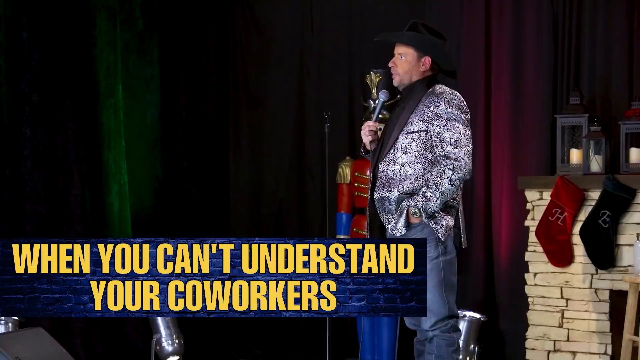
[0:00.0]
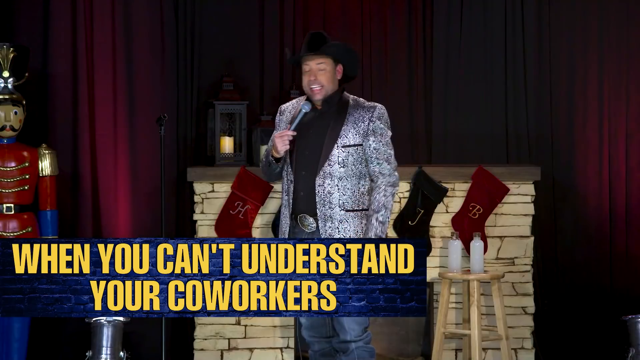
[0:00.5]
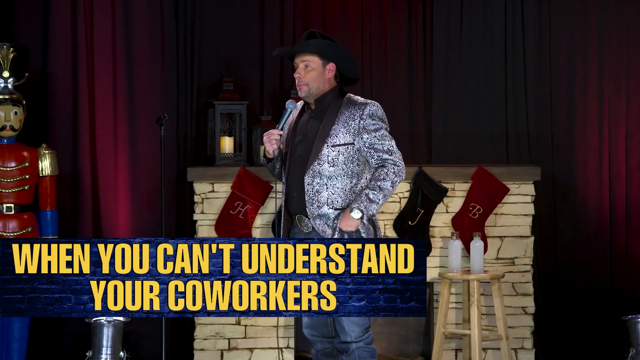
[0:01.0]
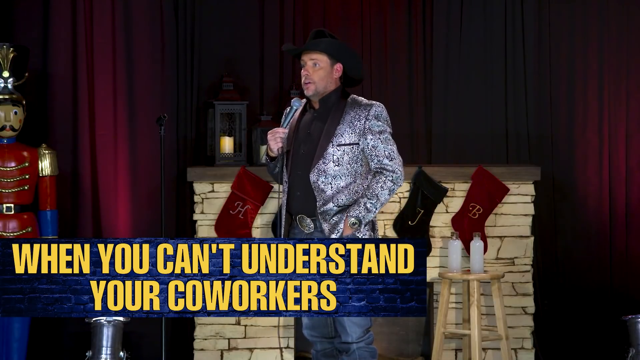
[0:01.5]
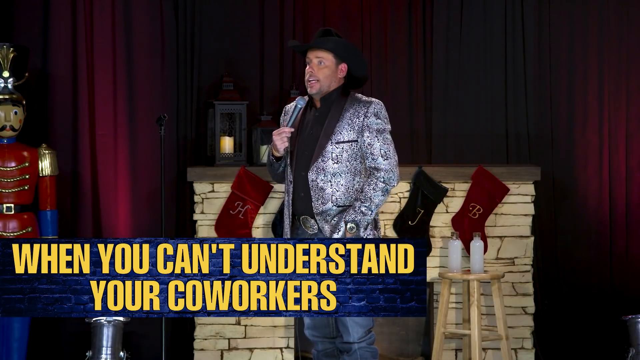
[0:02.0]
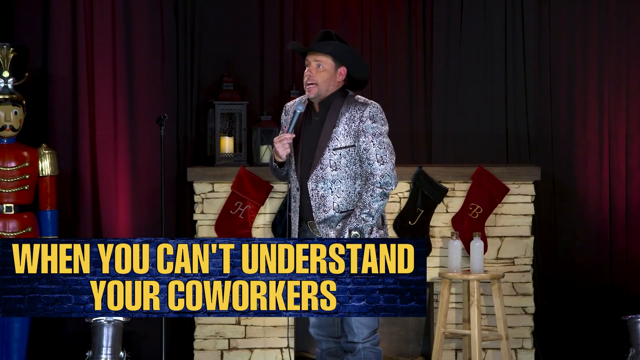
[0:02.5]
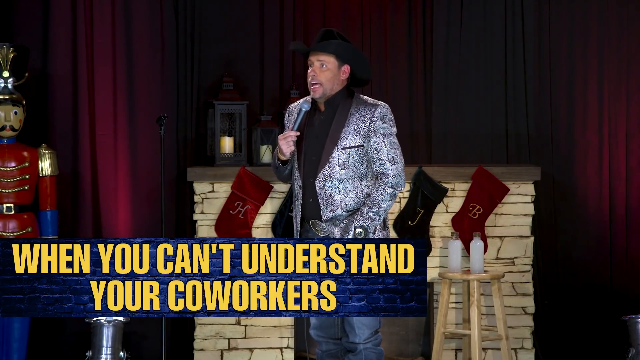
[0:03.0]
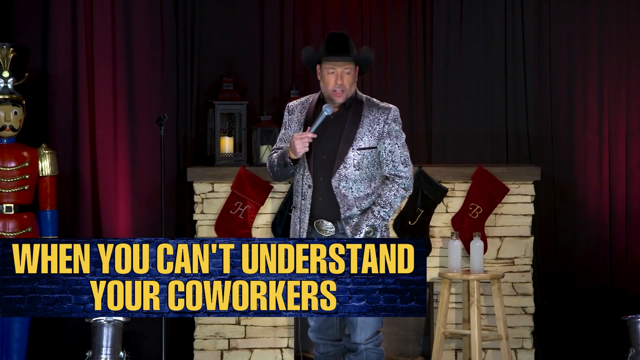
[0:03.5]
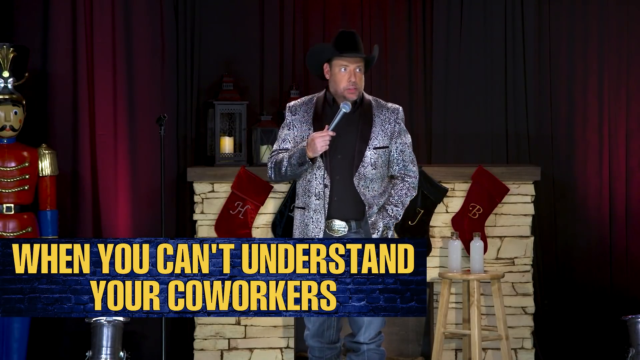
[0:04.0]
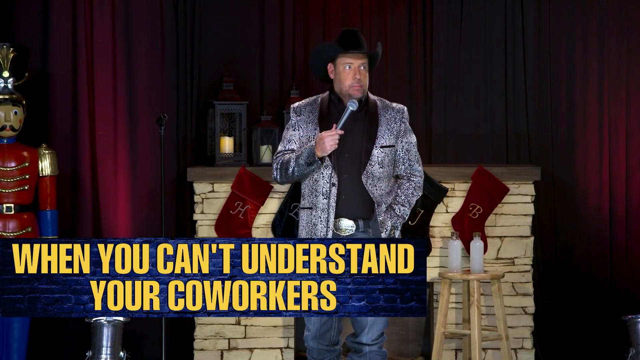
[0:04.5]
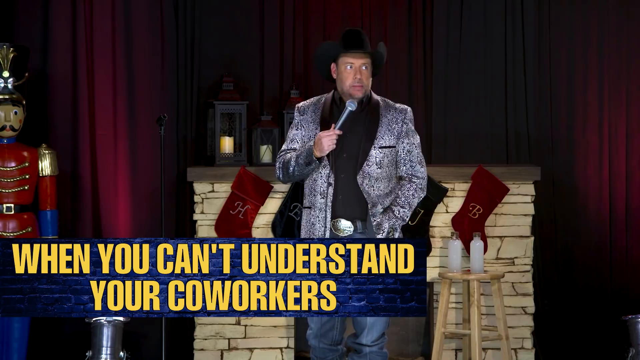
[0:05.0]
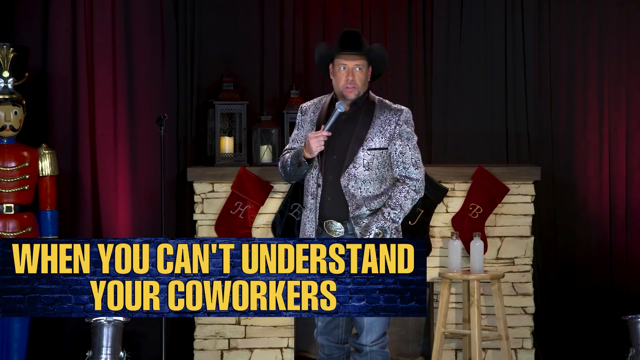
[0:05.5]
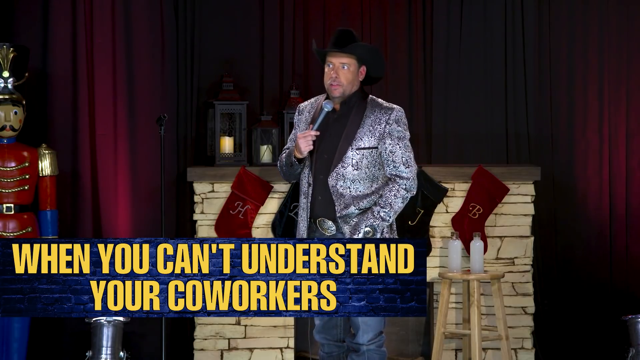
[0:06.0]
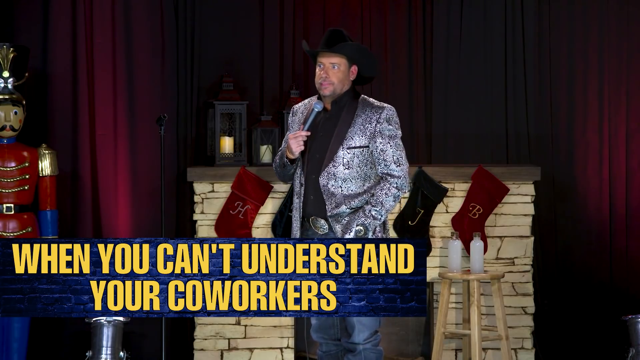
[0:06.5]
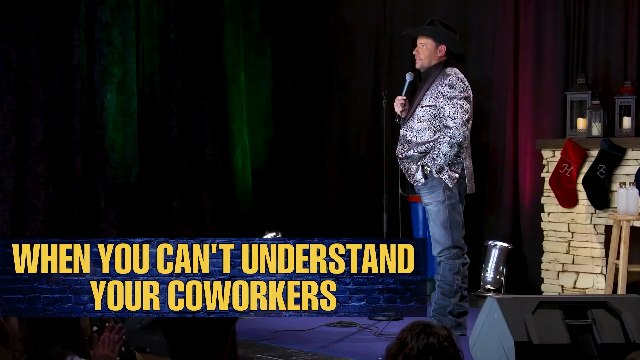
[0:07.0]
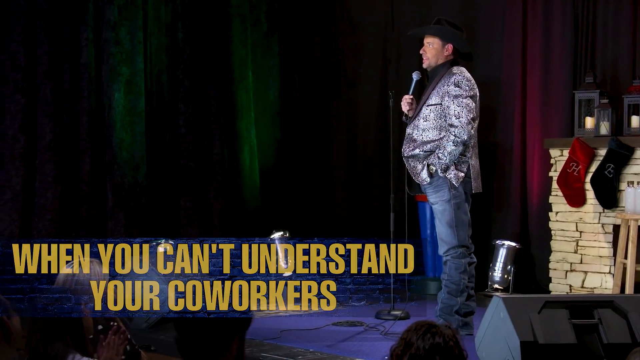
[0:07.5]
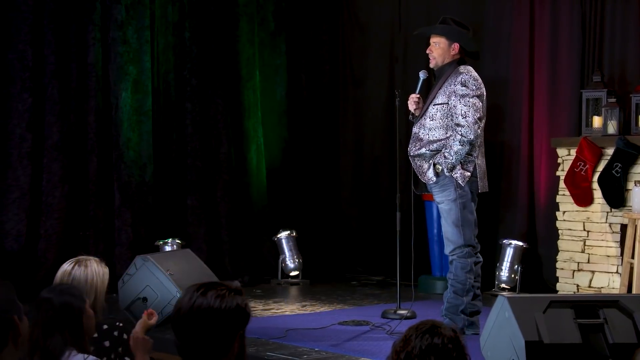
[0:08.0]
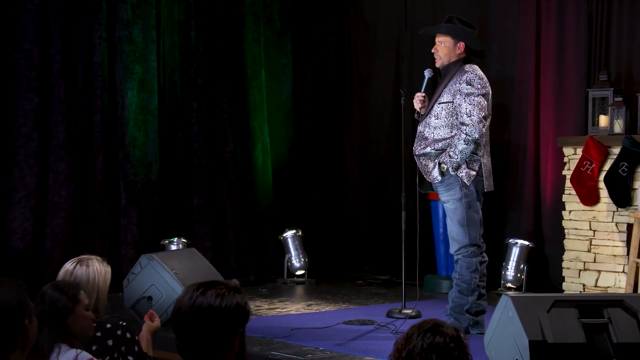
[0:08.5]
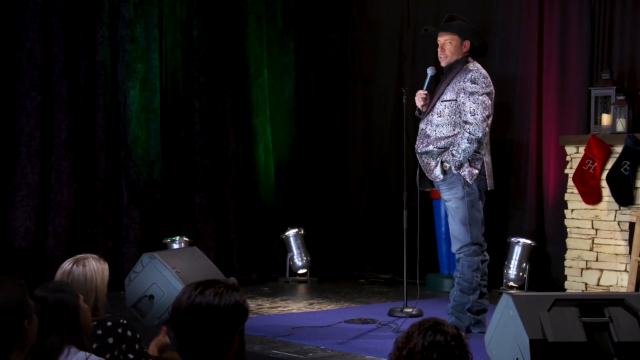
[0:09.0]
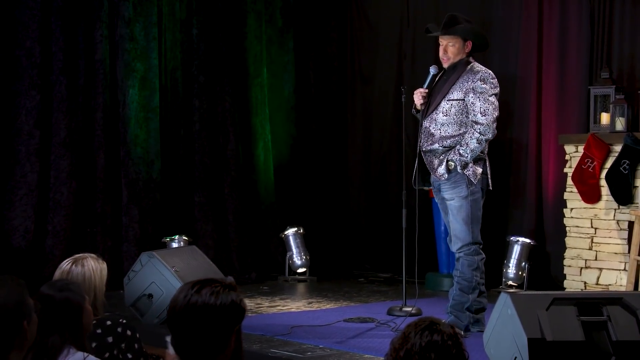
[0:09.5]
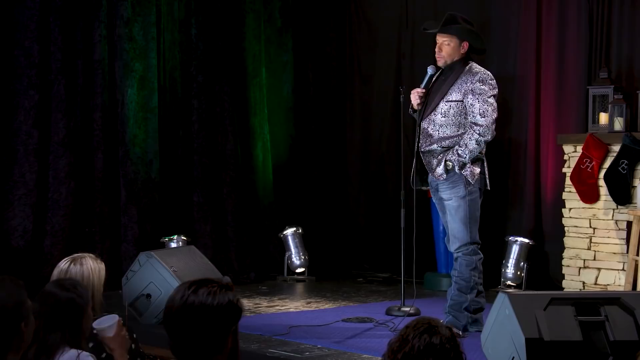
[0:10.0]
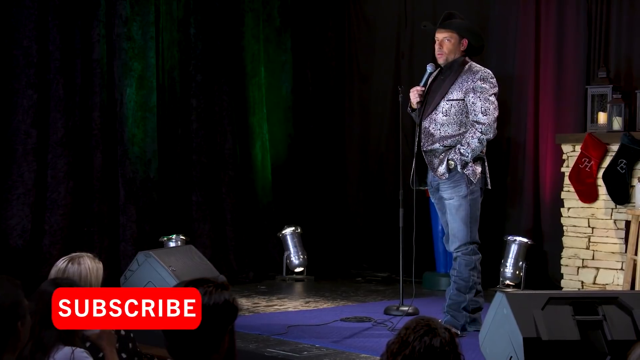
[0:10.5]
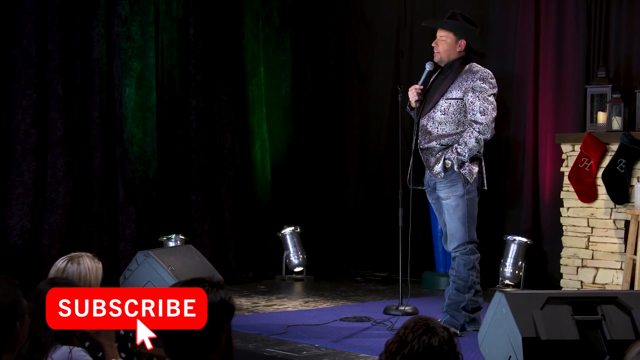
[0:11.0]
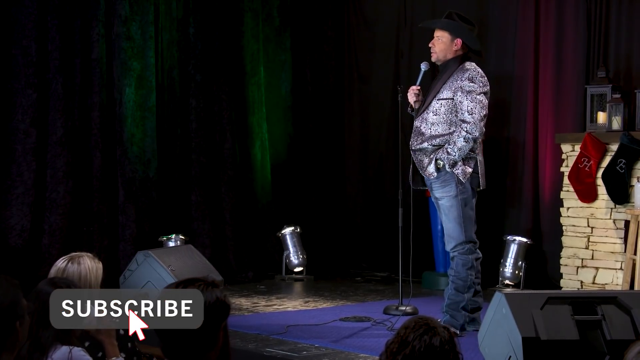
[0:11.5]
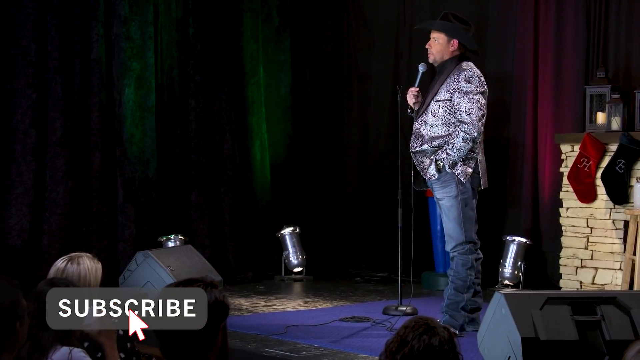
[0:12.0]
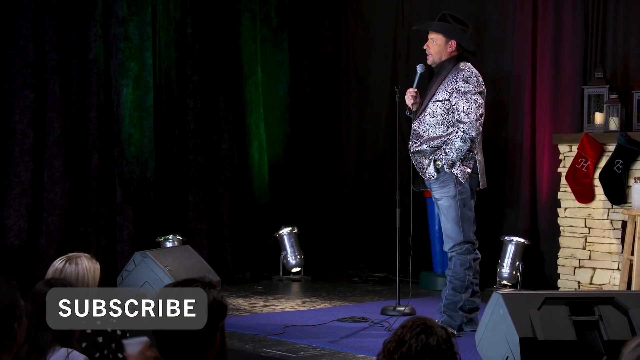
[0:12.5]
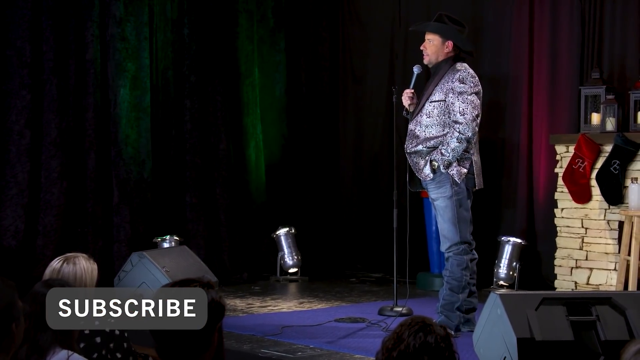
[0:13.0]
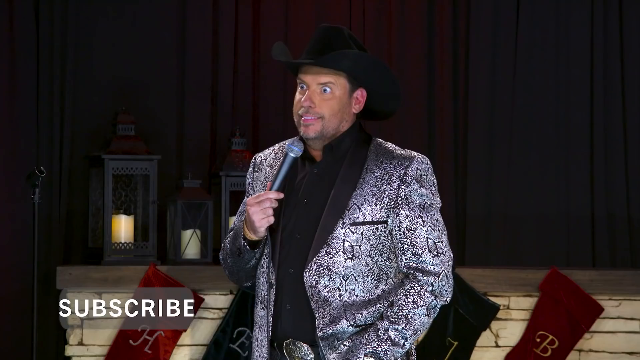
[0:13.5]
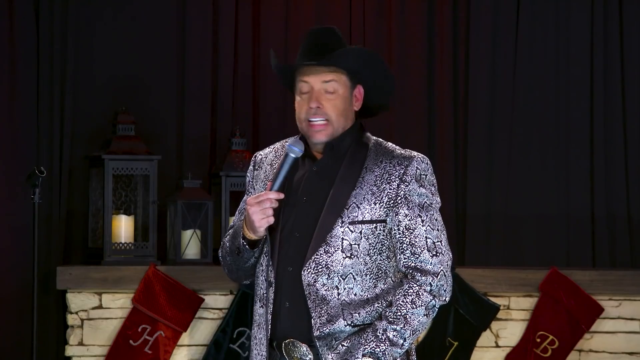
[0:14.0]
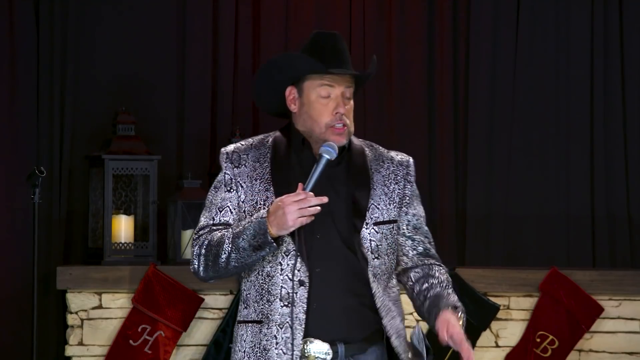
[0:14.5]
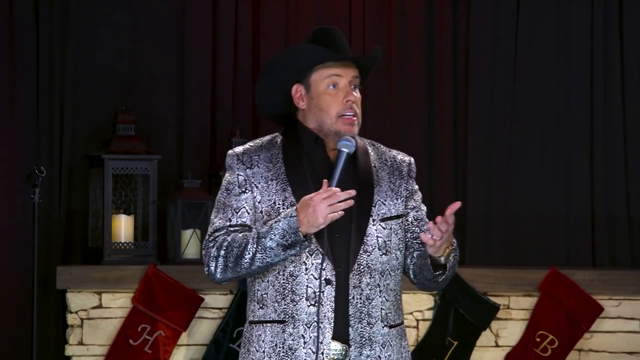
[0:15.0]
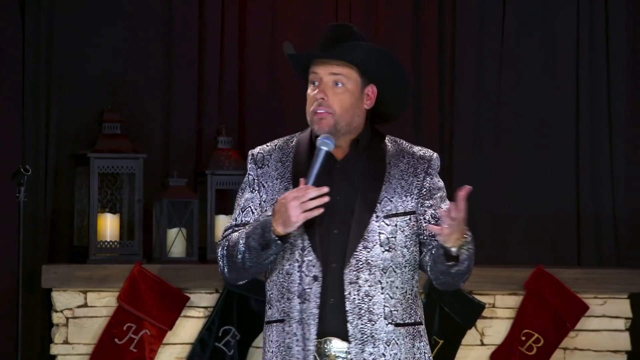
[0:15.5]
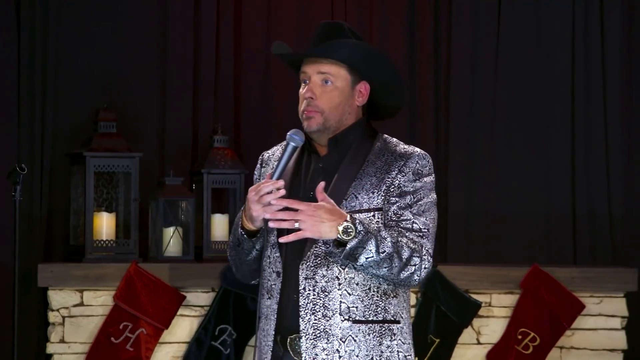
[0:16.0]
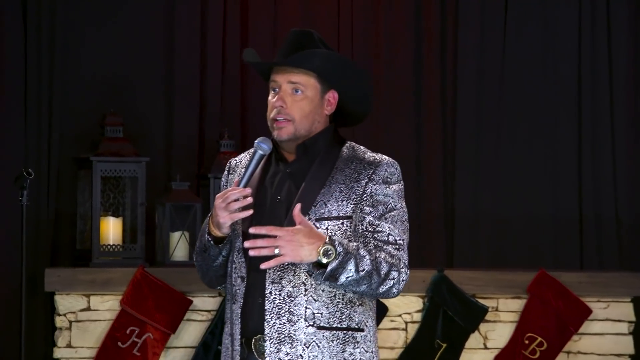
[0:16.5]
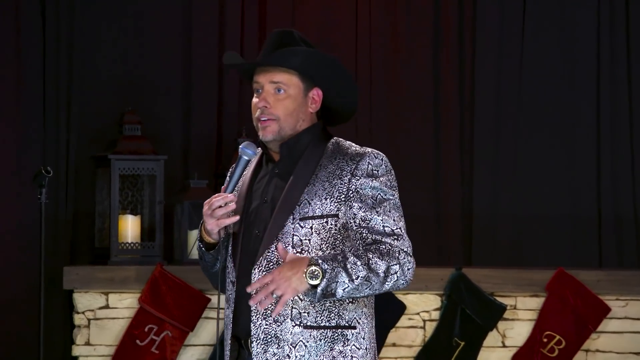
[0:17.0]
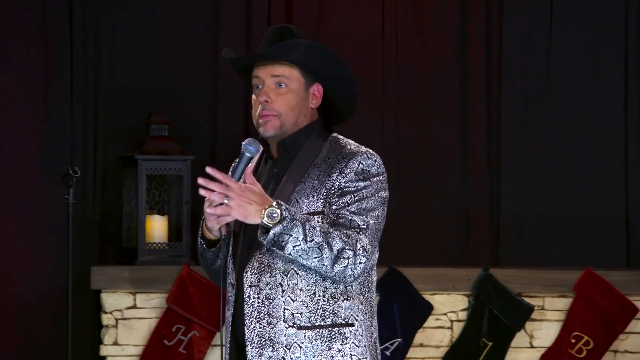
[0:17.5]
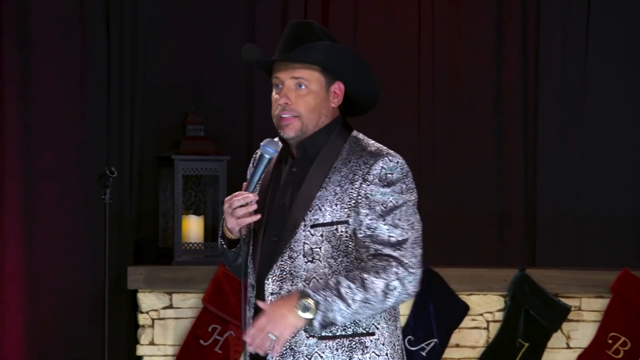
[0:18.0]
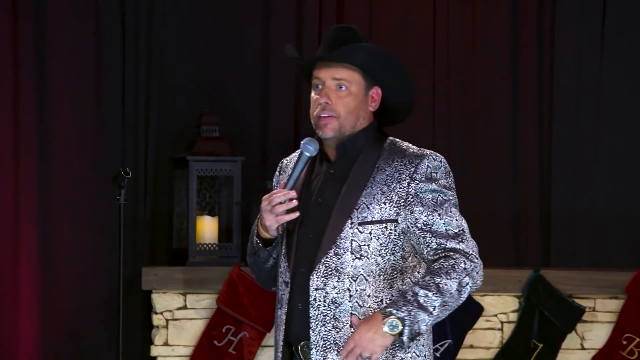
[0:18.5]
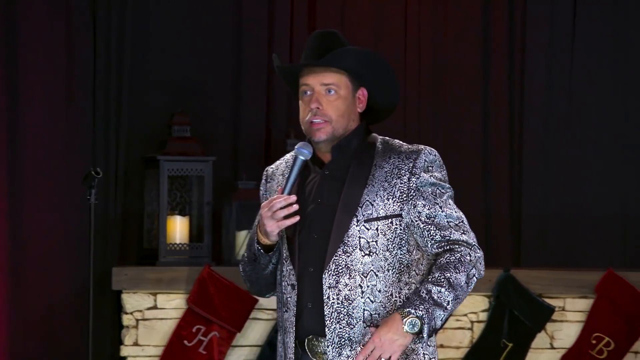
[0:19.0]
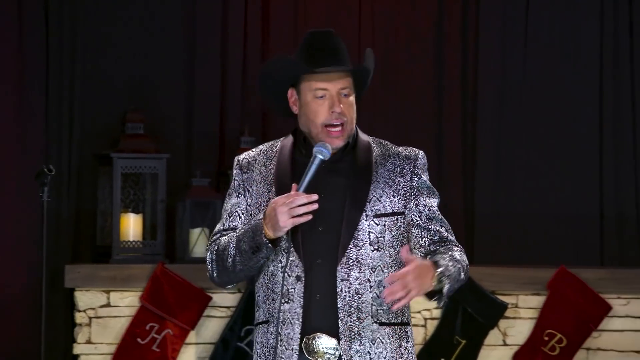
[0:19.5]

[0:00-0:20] A man is on stage wearing a white jacket and a black shirt, near the top of the stage. The top of the stage has red curtains and a picture of a man who is a statue. Near him are five different socks, each showing a different letter, and they are behind a series of water bottles. Next, a blue box picture appears about not being able to understand your coworkers. The rest of the stage is then shown, with green curtains, and a subscribe button appears, first highlighted in red and then unclicked and shown in black. The man continues to speak, and he is wearing a watch as he speaks.